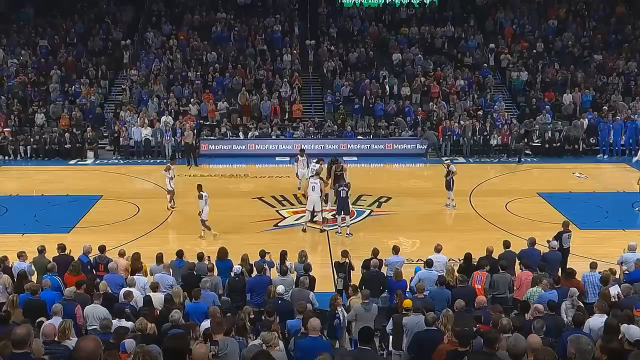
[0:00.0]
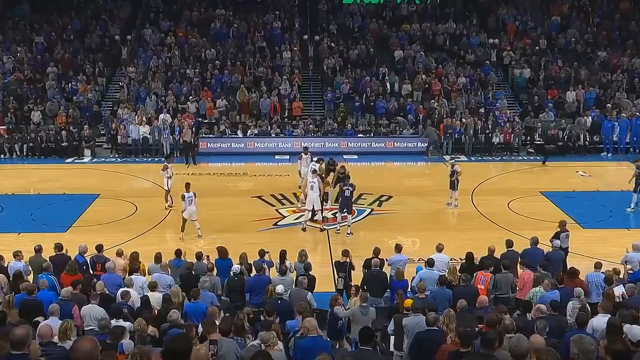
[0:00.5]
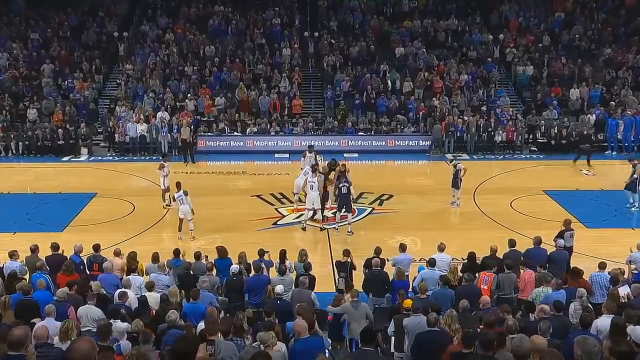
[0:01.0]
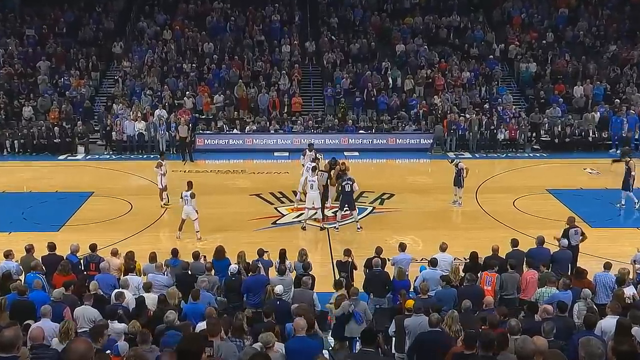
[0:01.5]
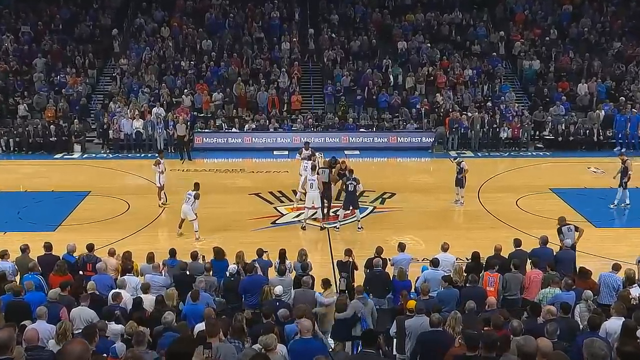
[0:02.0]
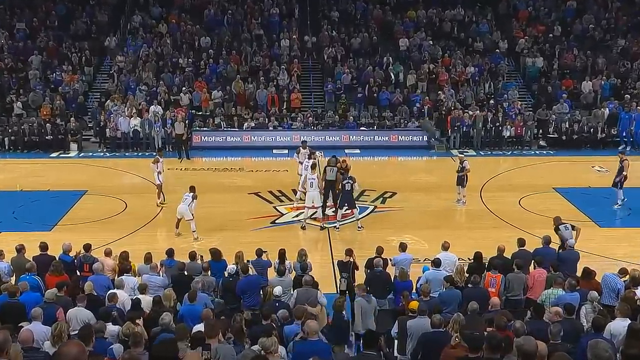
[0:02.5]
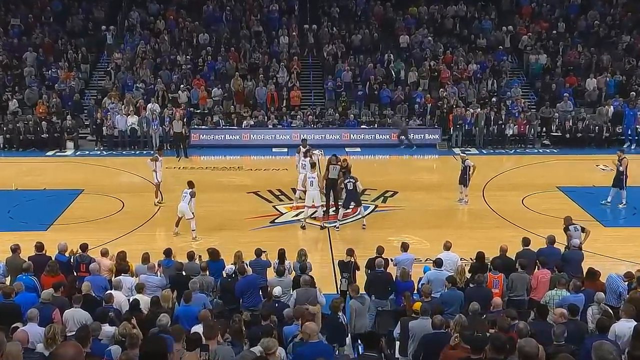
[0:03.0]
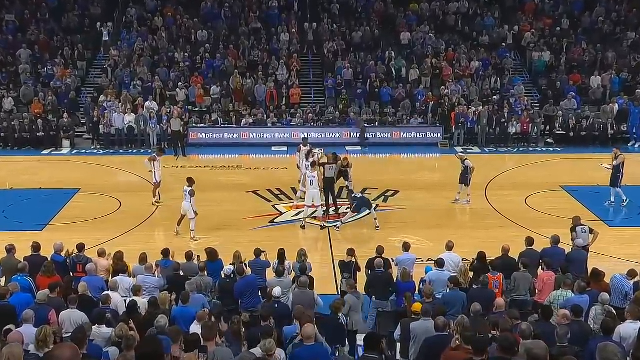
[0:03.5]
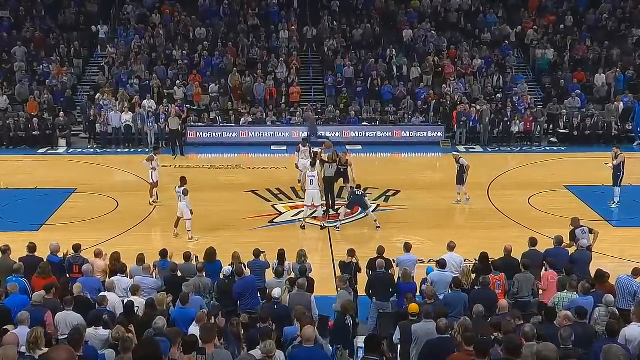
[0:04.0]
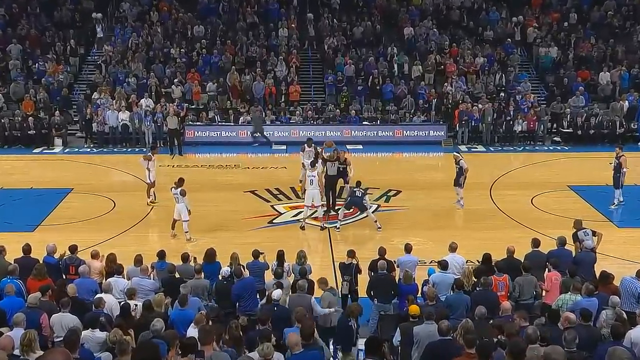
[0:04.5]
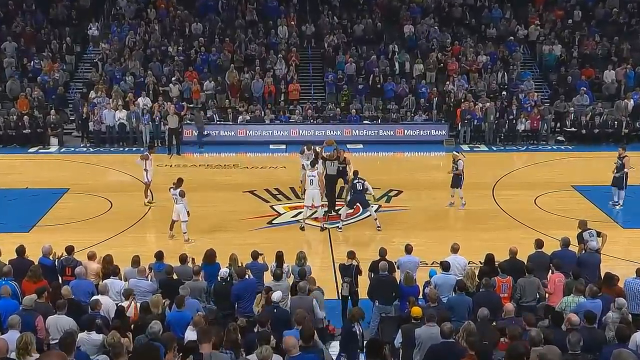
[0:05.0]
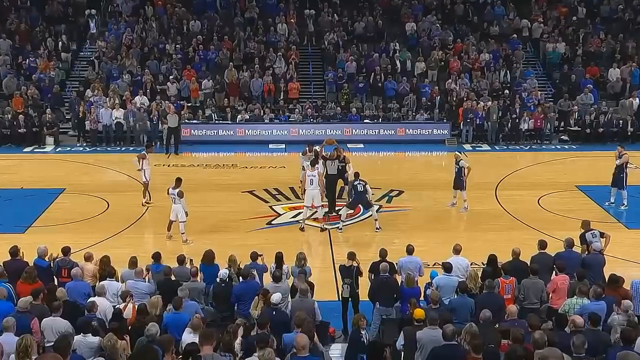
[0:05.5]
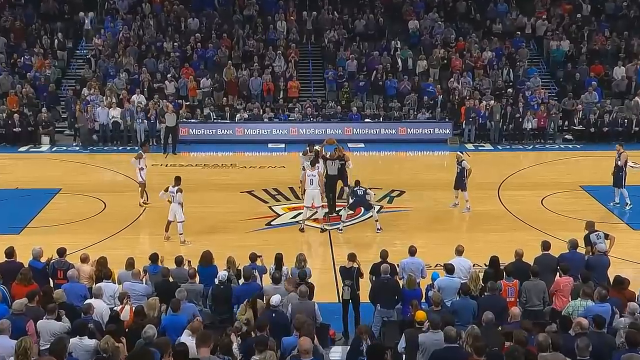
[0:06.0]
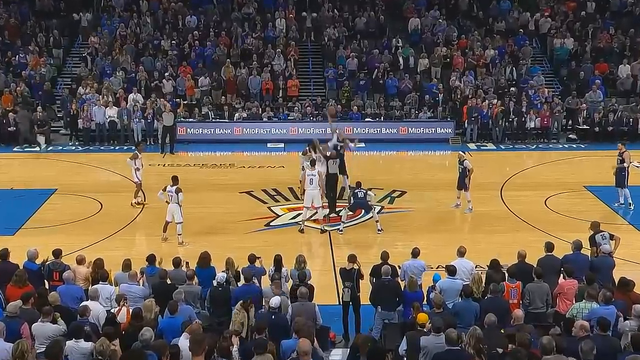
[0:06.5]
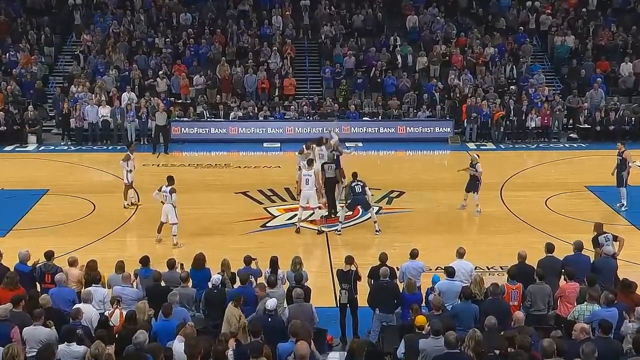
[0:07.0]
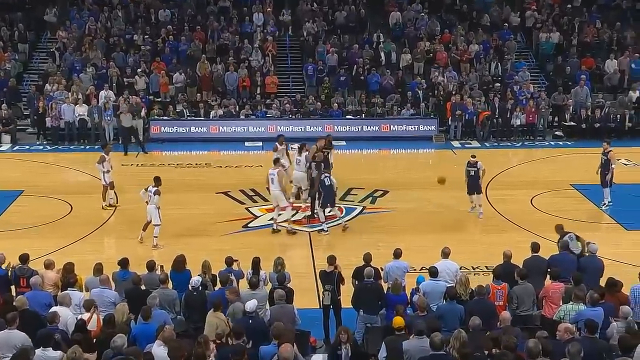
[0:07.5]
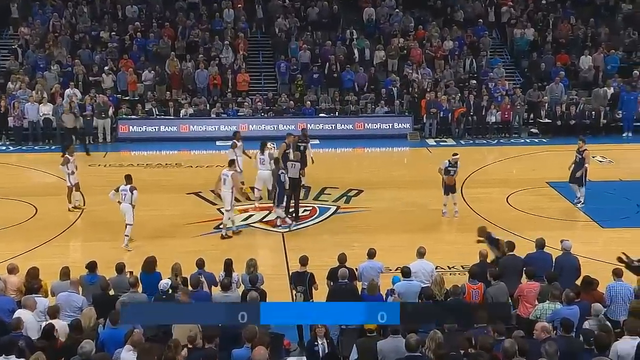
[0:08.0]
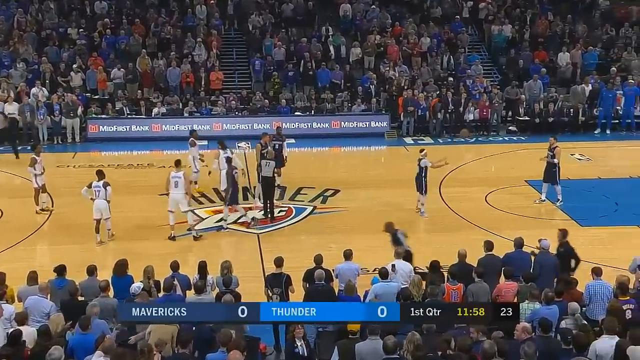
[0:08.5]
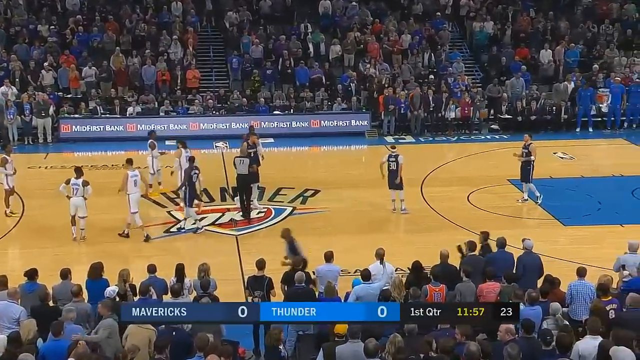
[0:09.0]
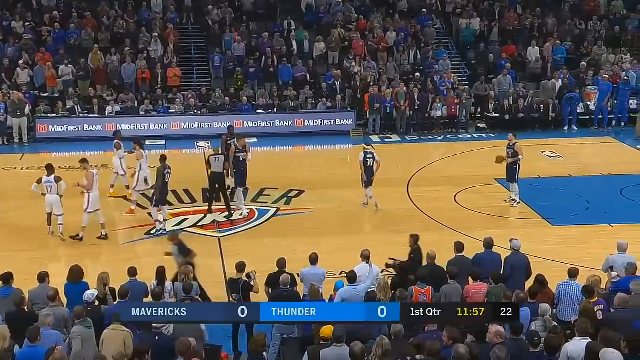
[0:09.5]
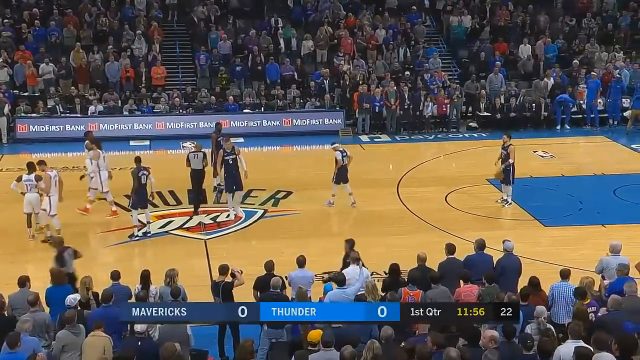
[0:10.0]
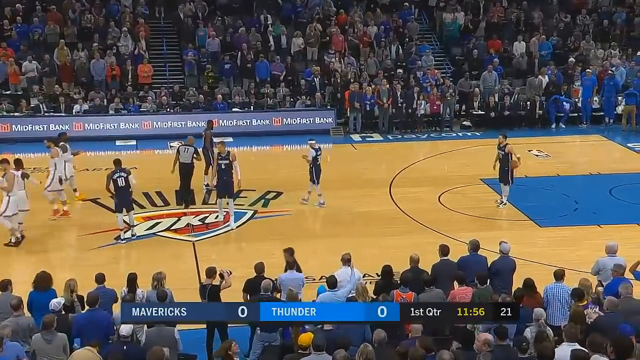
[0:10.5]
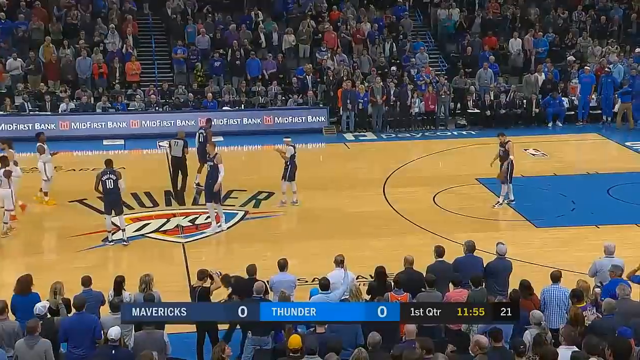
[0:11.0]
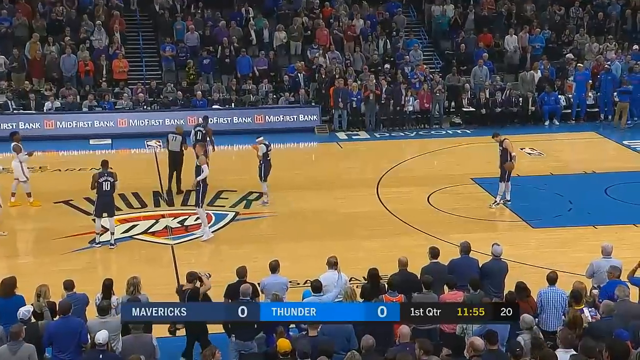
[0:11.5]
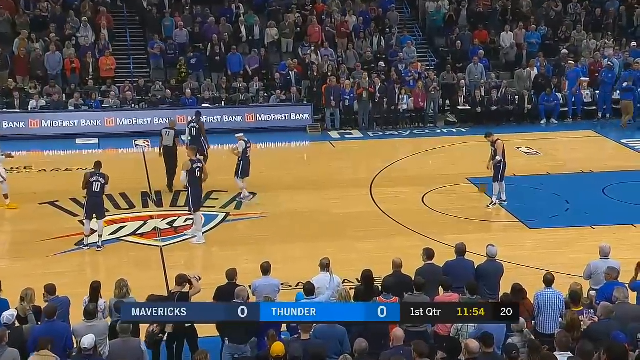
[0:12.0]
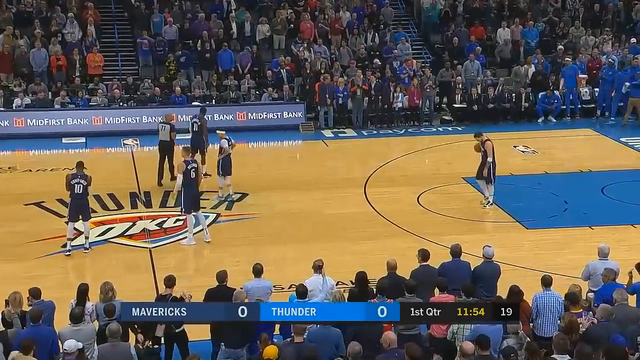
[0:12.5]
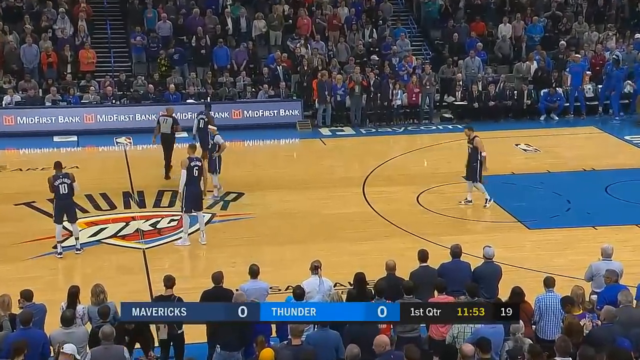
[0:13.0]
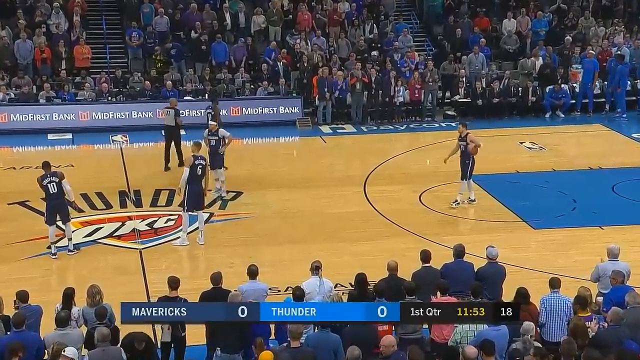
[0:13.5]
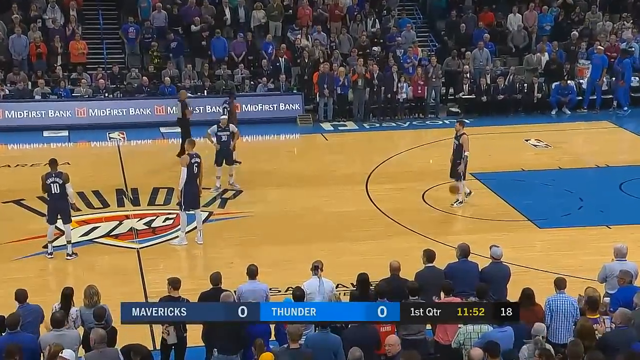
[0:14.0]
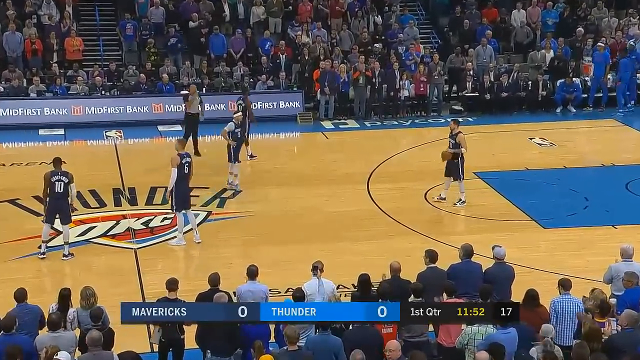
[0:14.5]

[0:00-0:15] The video is titled "Luca Doncic Cheat Code Mode Activated Shots," with more to the title that is not visible. A shot from far back shows the Dallas Mavericks and the Oklahoma City Thunder, apparently playing in Oklahoma City. It is the jump ball to start the game, and the Mavericks win the ball. It is thrown back to a player standing near the three-point line or at the top of the key under one basket. The players are all kind of just walking around, with nobody showing much urgency. The stands appear to be quite full. Cheerleaders are in the stairs between the sections of seating, waving their pom-poms and dancing around a bit.